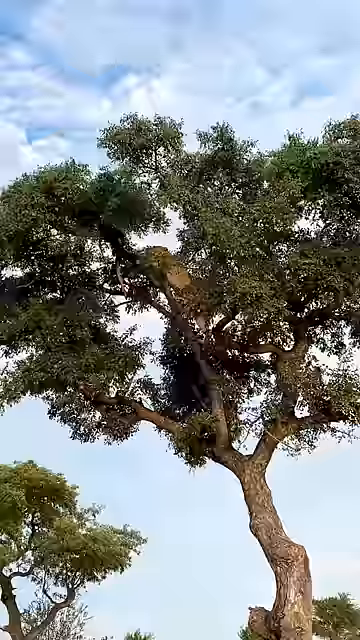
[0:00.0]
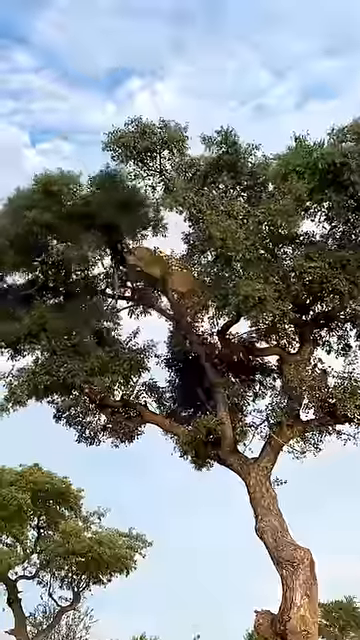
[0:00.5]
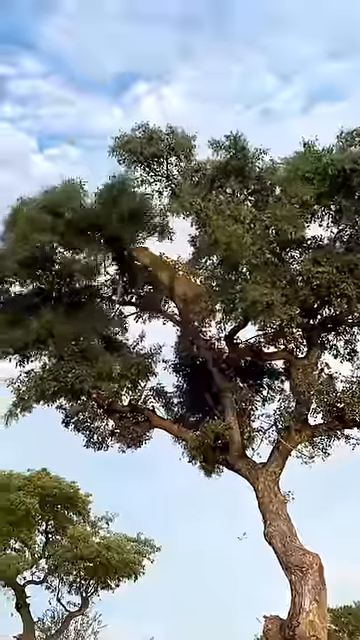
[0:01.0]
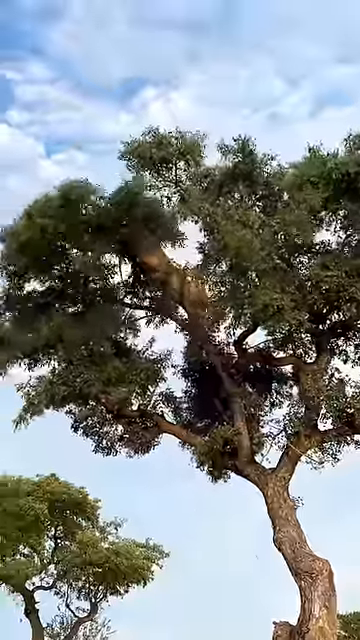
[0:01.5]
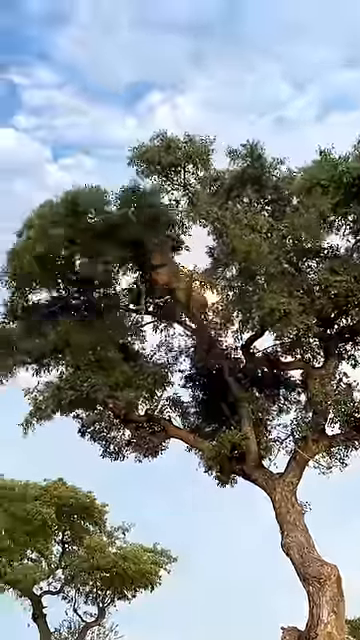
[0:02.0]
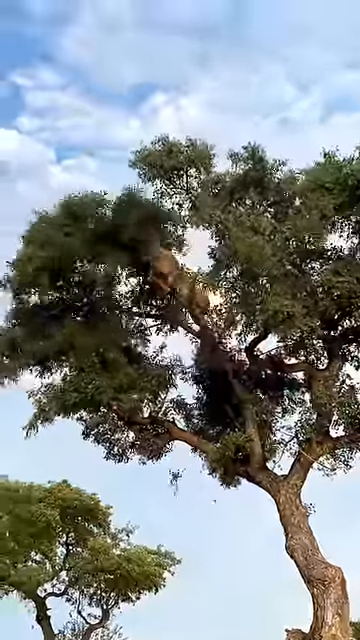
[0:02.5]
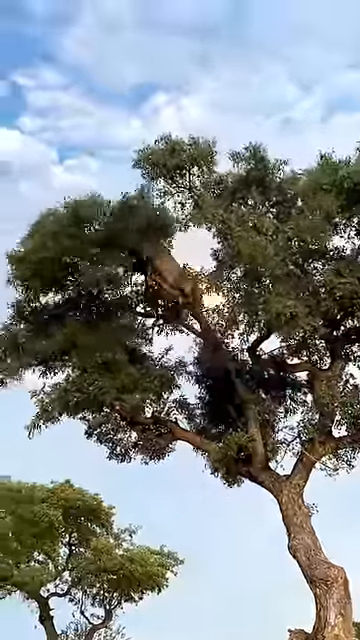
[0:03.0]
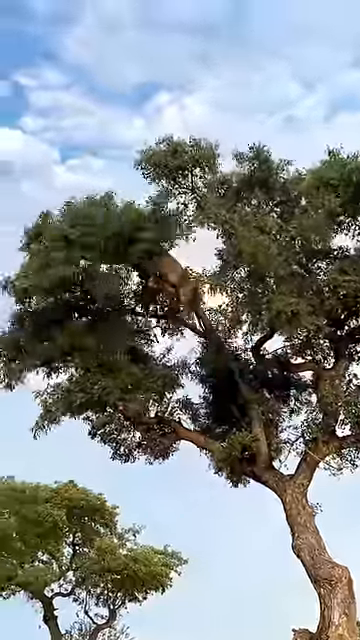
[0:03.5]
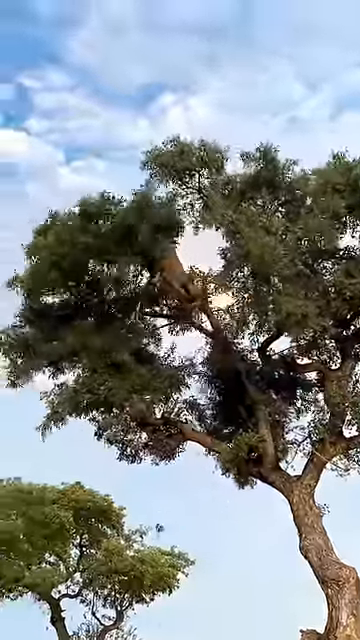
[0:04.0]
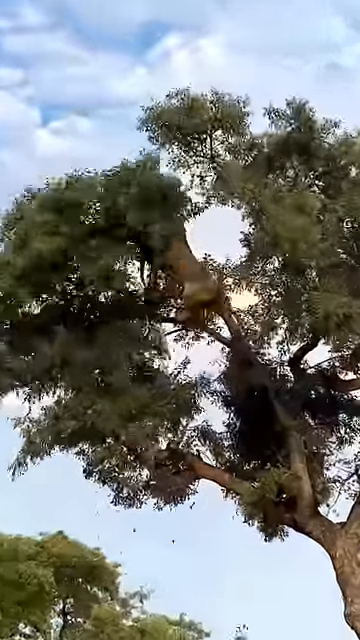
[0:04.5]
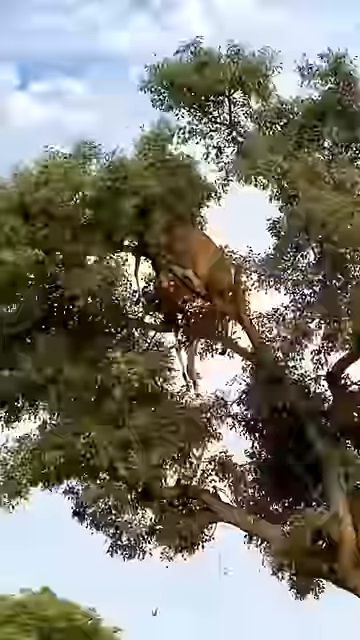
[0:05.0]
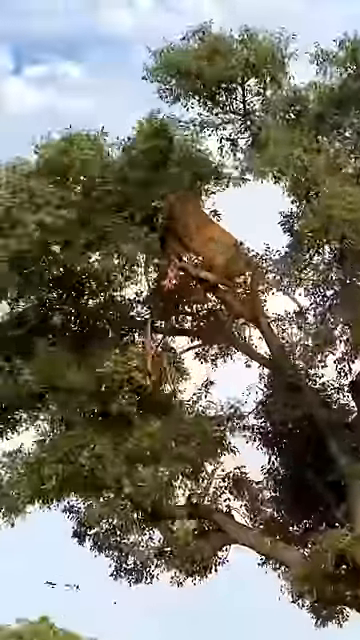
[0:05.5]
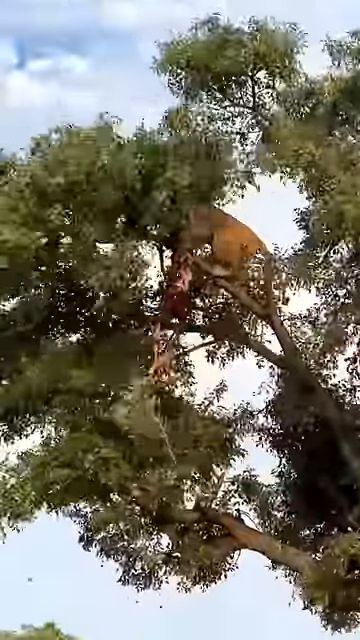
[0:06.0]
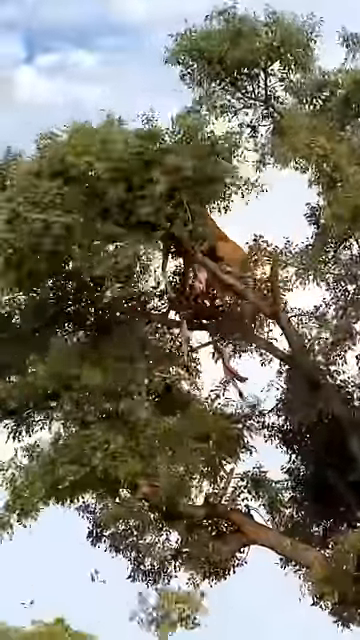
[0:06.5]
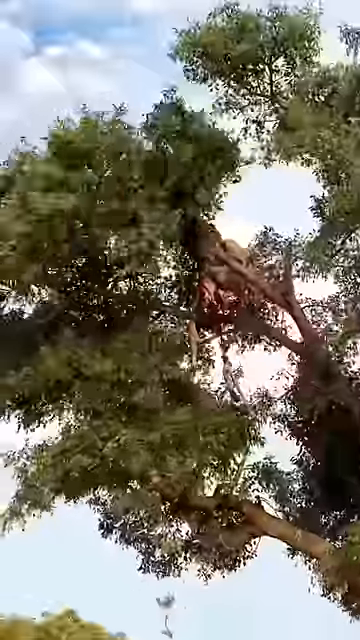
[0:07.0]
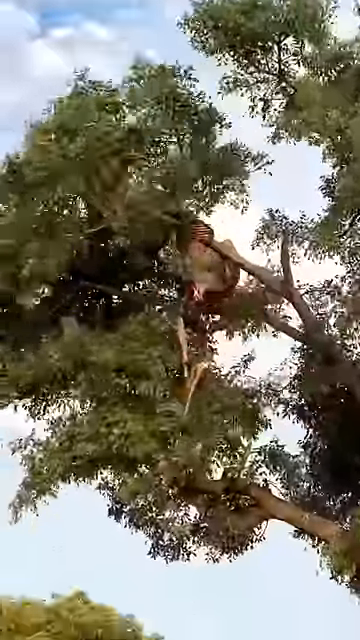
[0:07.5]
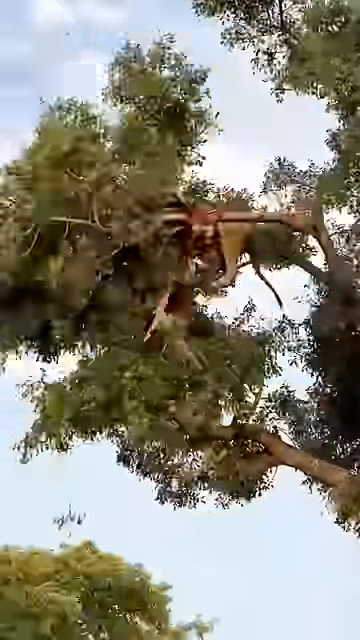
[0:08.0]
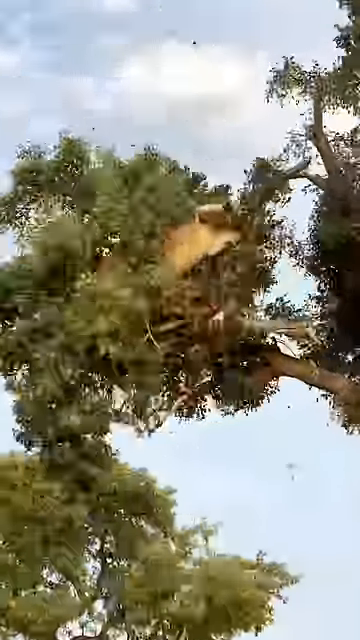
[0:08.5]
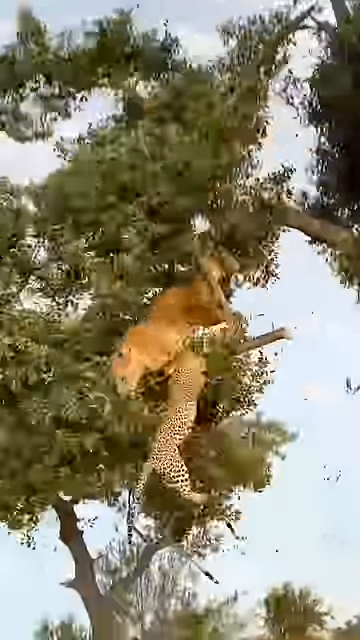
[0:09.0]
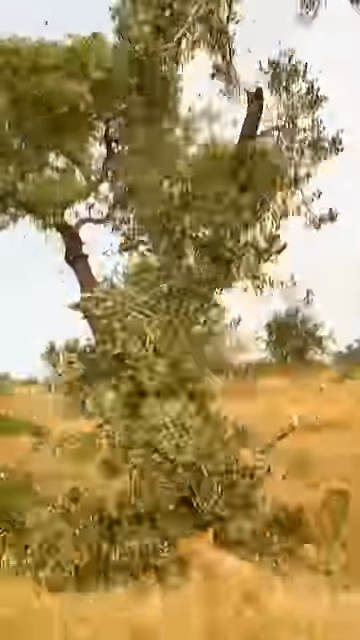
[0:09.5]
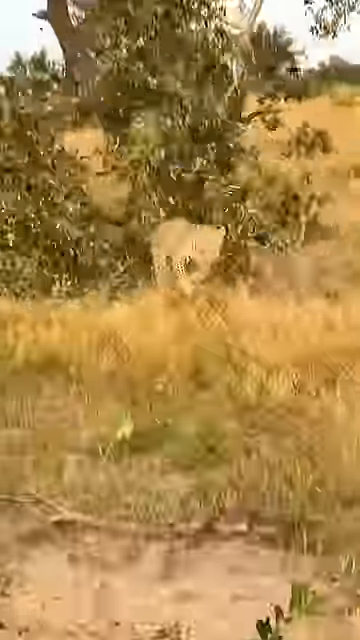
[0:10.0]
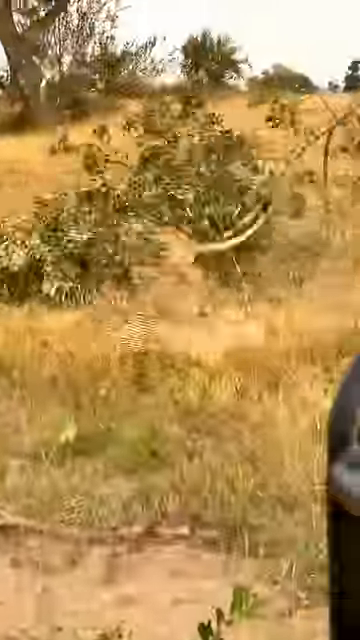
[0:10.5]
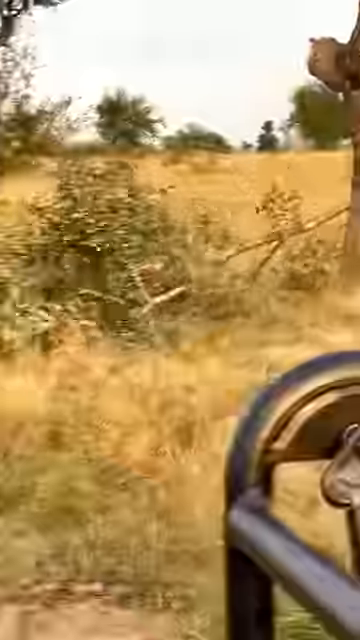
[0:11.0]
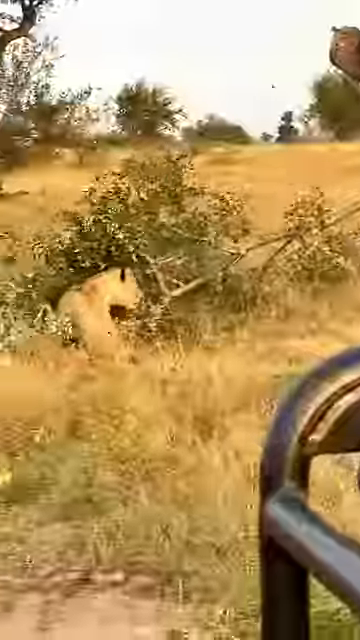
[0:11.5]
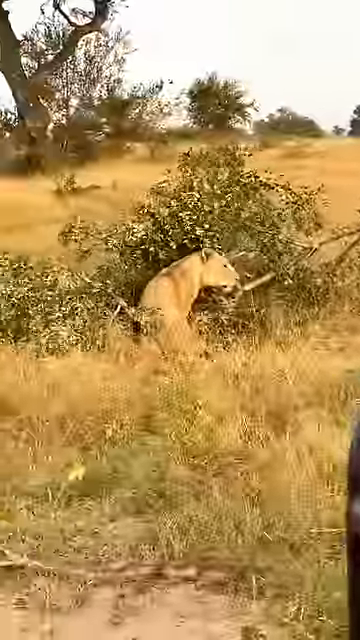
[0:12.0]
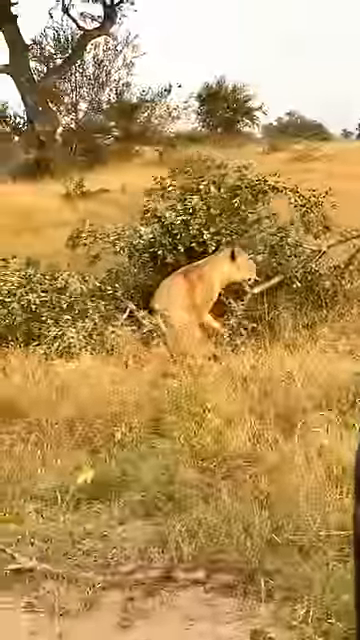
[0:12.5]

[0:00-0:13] A leopard and a lioness fight on top of a tree. As the scuffle goes on, the tree branch collapses, and both the leopard and the lioness fall. Neither seems really hurt: the leopard easily runs away, while the lioness just looks at what happened. The video is taken during the day. The person filming is probably sitting on top of a car, since the handle of the bumper appears in the video.